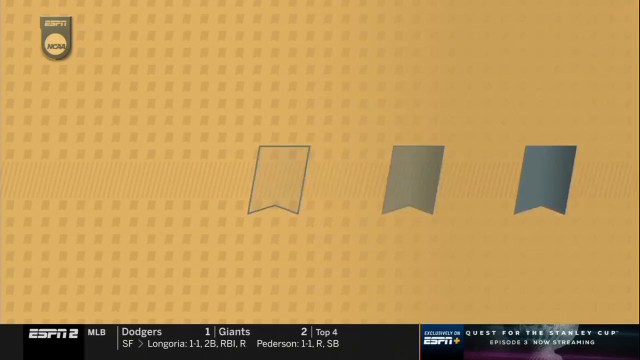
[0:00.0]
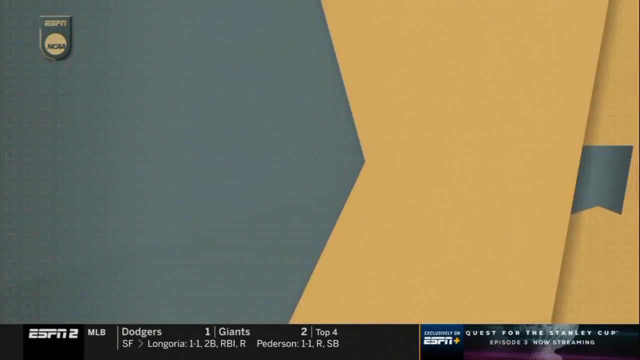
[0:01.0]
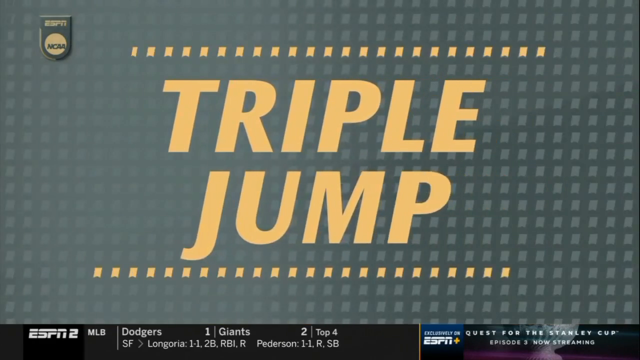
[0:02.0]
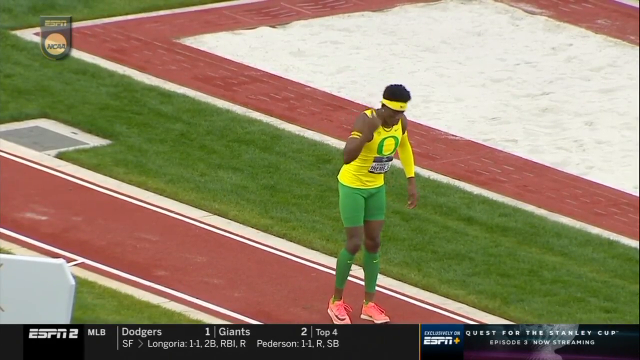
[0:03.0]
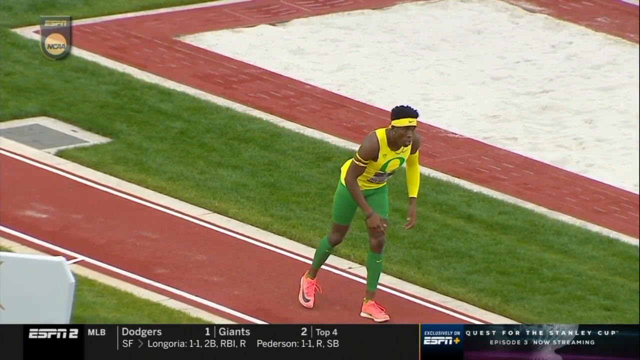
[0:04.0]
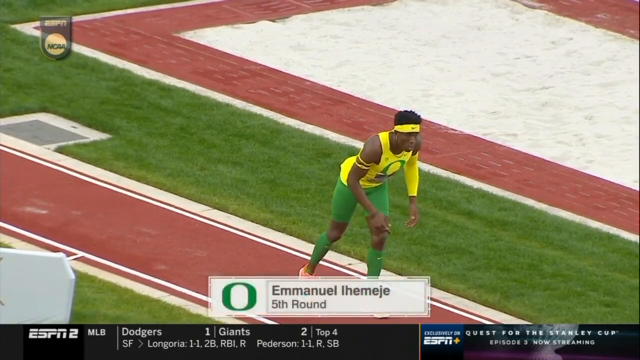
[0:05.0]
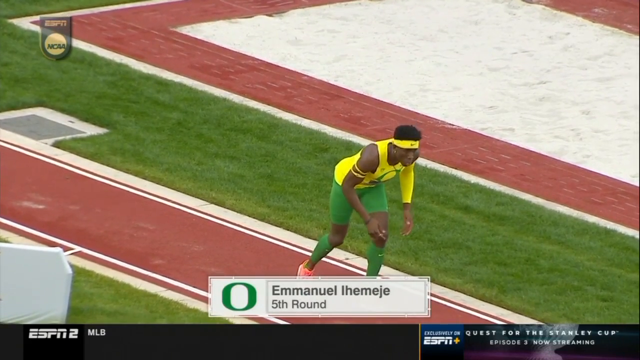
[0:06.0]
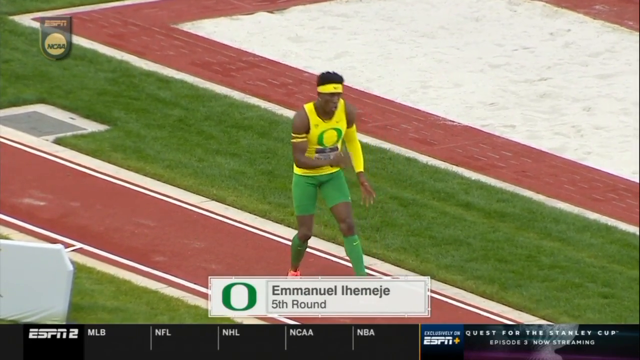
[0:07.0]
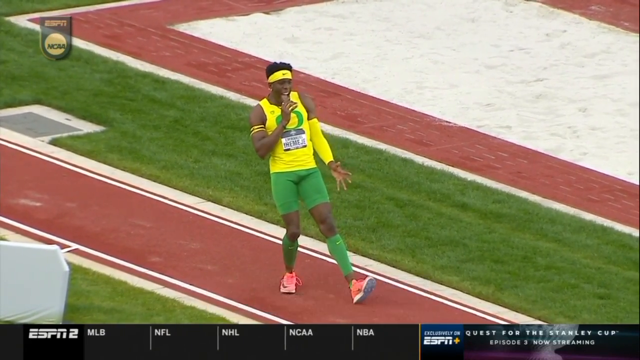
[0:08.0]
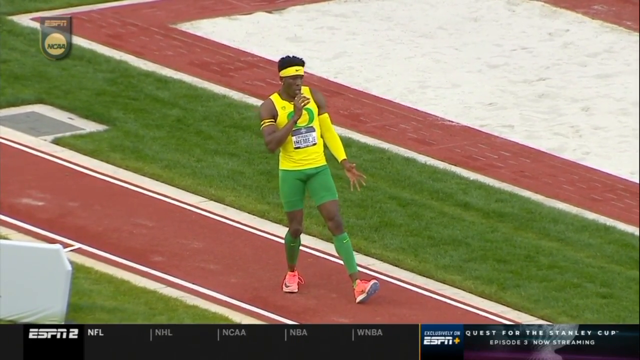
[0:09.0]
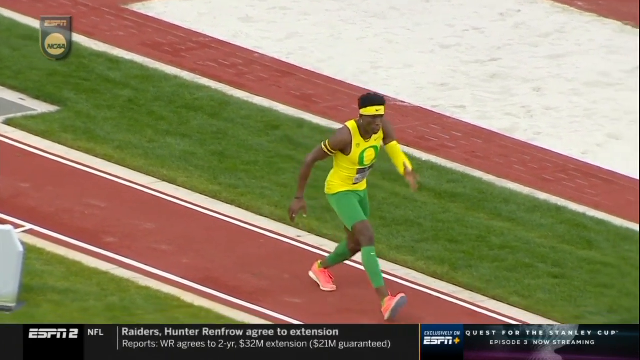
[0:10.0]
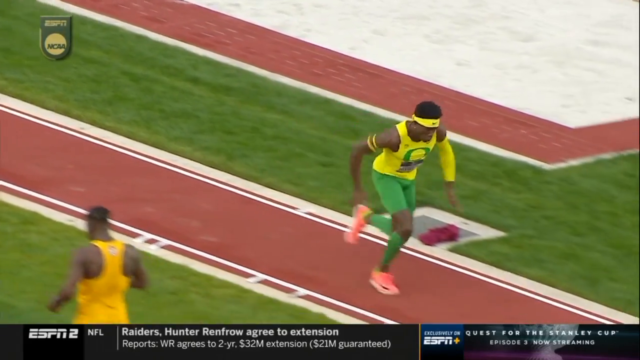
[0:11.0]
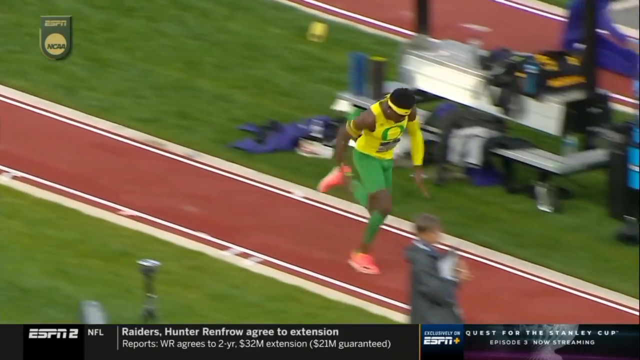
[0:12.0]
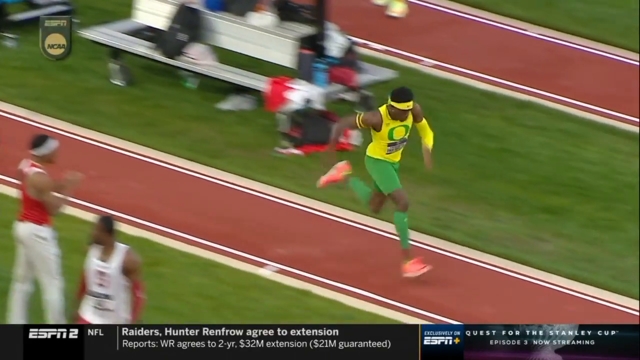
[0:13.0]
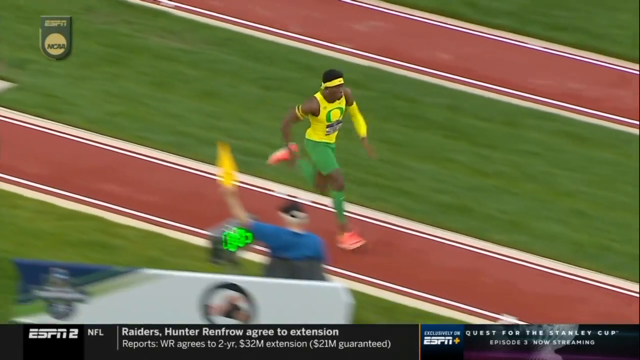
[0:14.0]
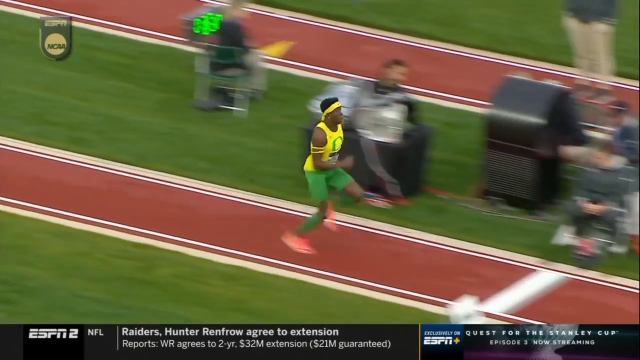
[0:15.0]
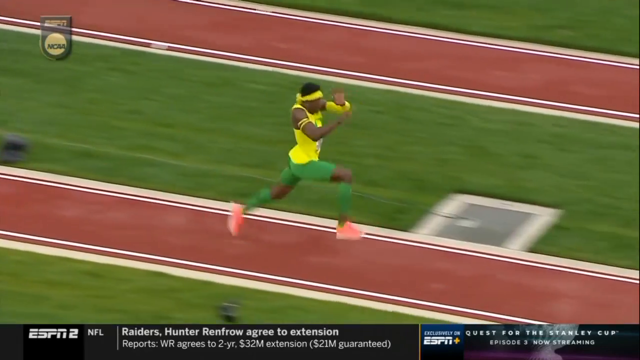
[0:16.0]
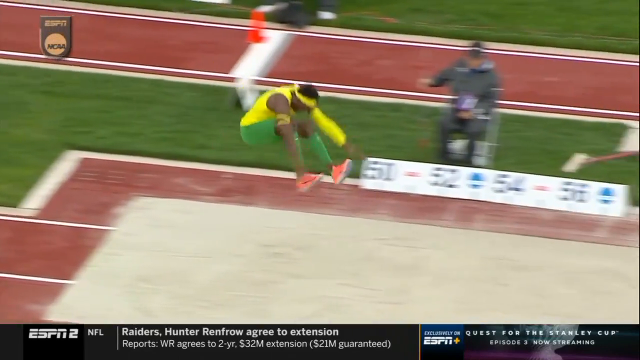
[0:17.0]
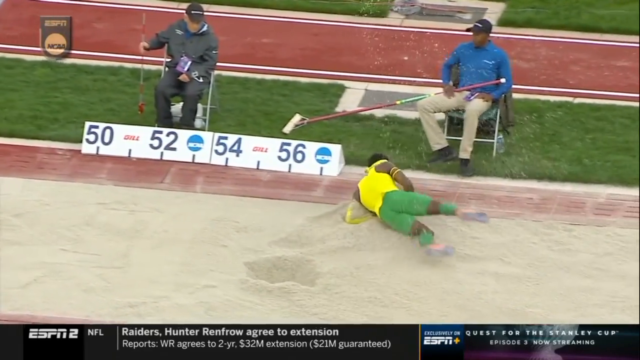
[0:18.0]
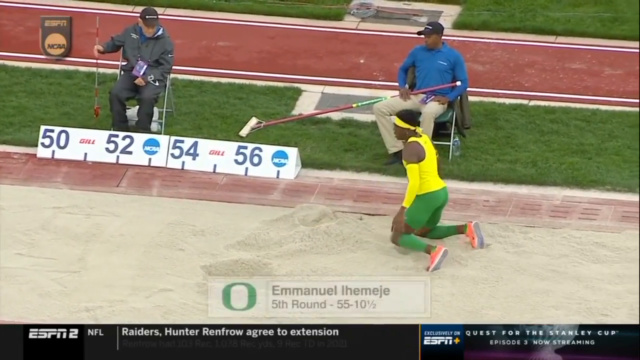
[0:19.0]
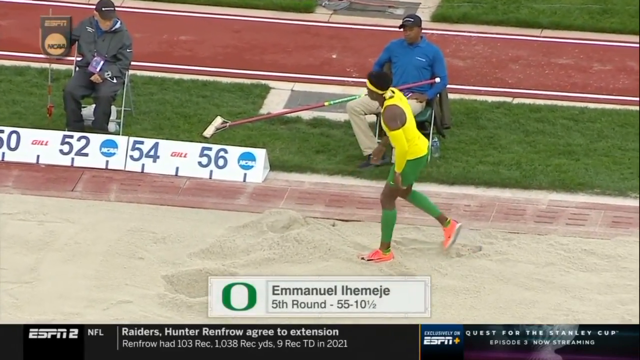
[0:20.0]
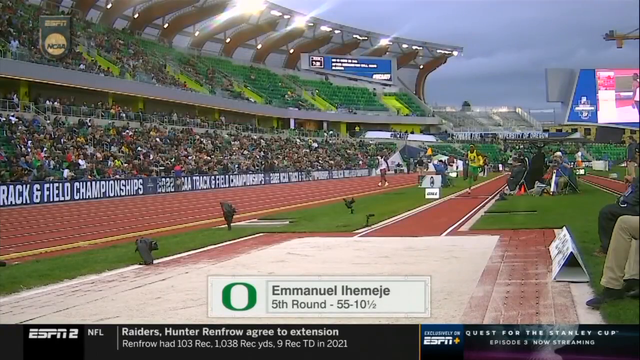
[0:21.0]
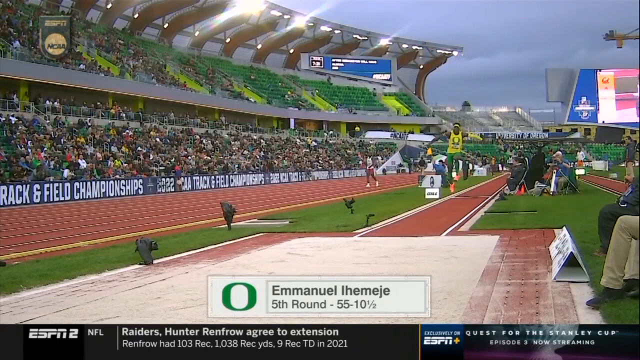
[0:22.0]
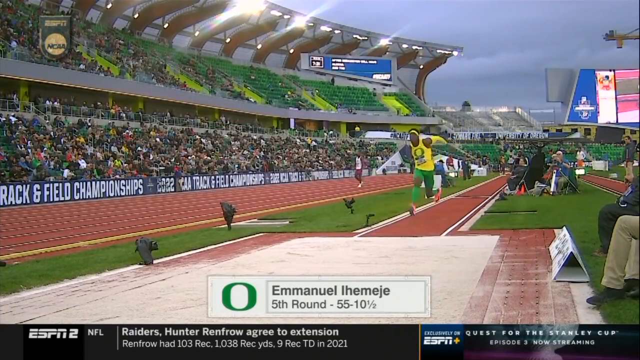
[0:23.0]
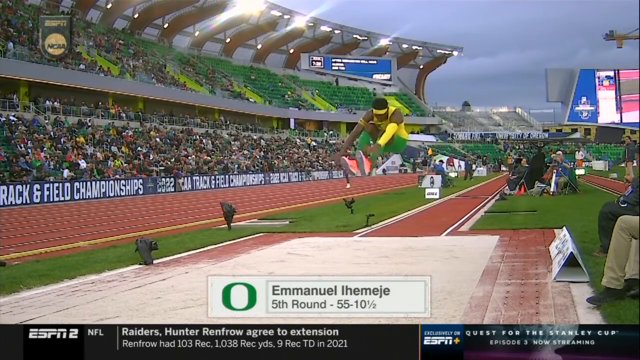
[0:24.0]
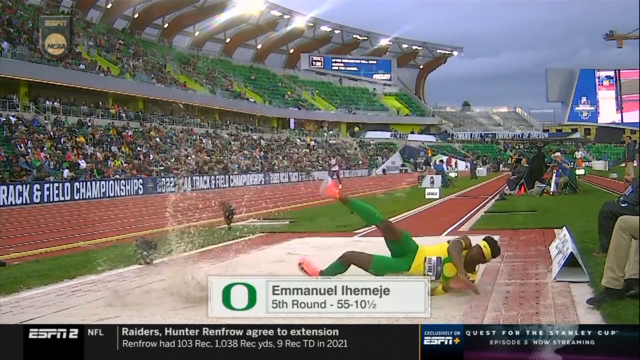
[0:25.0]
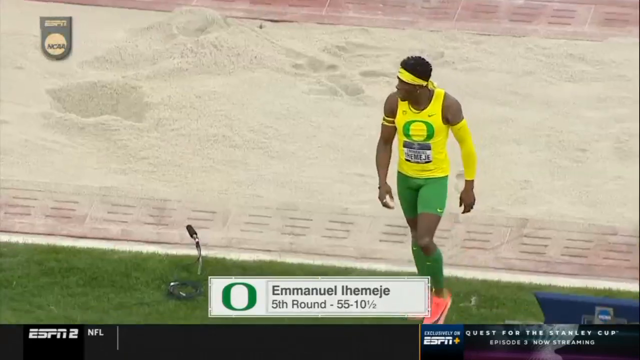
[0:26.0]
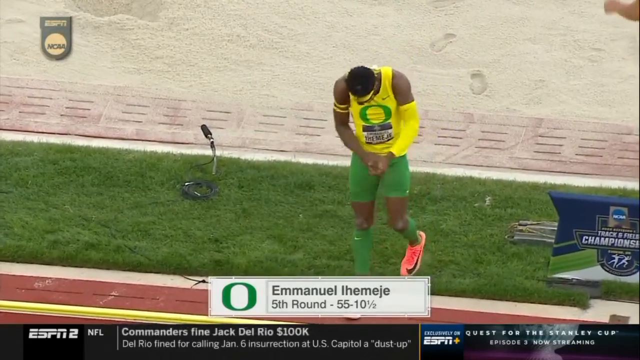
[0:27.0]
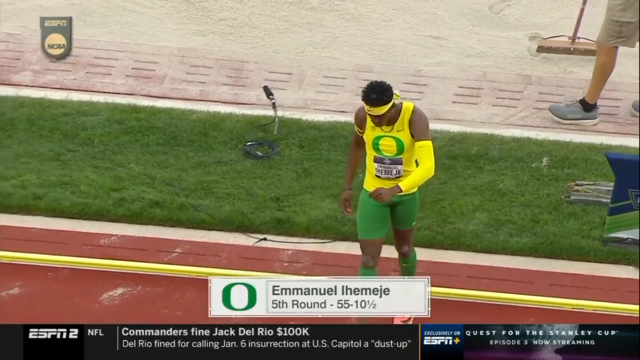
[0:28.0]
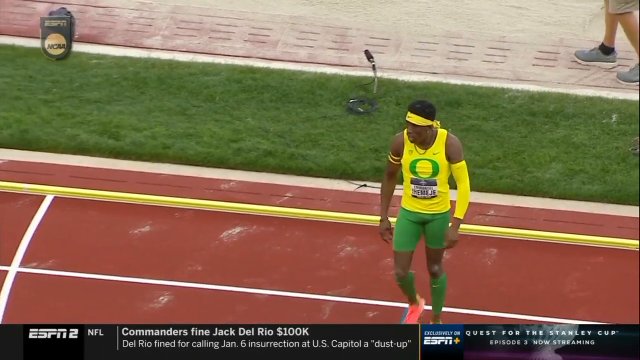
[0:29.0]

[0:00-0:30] A graphic reading "triple jump" appears at the start of this track and field event, in gold-looking text on a grayish background. An athlete who appears to be from Oregon State follows, wearing a yellow sleeveless tank with a large green O on it, green biking shorts, bright fluorescent pink-orange shoes, green calf sleeves and a yellow headband. Behind him is a typical track and field setting. He turns and waves to the crowd, gets into a starting or crouching position, leans back, and starts running down the clay-orange runway. Nearing the sand pit, he takes some larger strides, then makes a very large leap at the end into the sand and crouches in the sand after landing. A replay follows from a different angle: the first view was from the side, while this one is from the front and looks almost a little computer animated, showing the same jump. The green track, people milling about, green grass and spectators in the seats are visible.